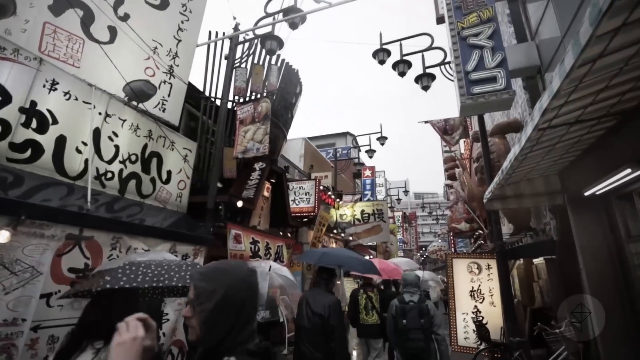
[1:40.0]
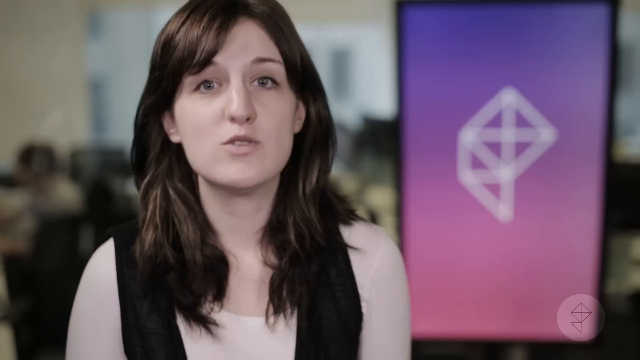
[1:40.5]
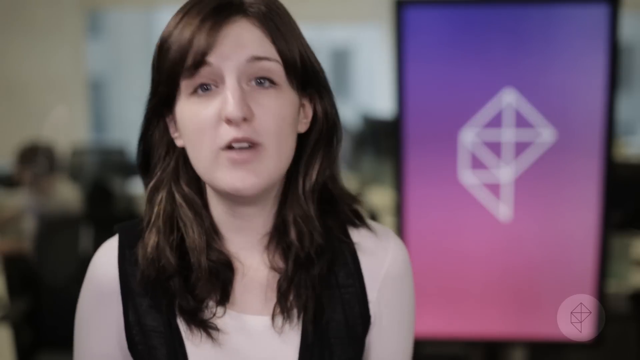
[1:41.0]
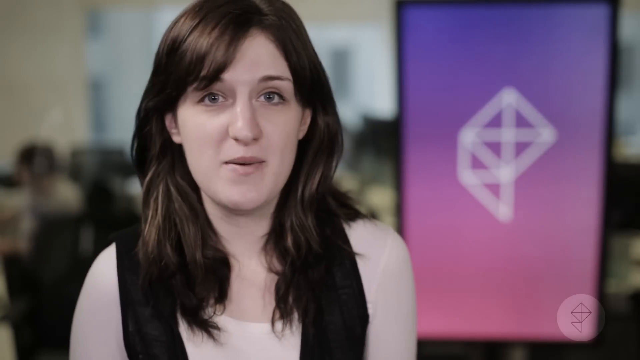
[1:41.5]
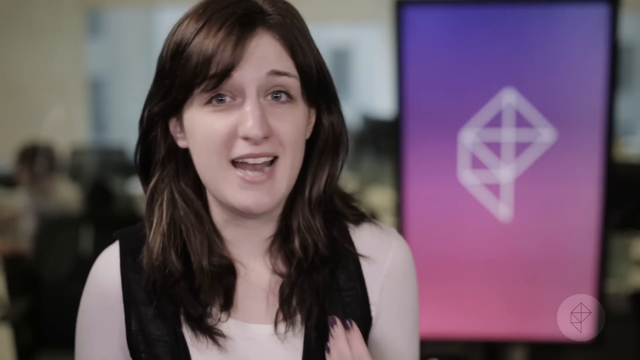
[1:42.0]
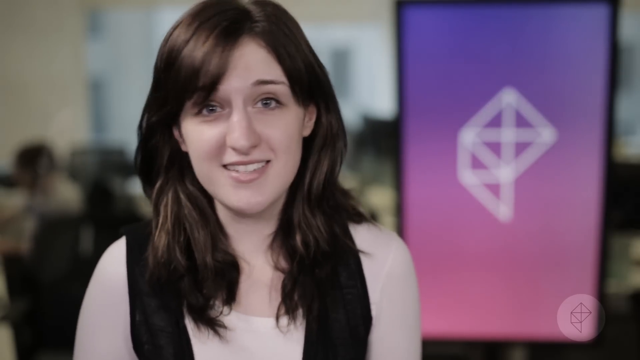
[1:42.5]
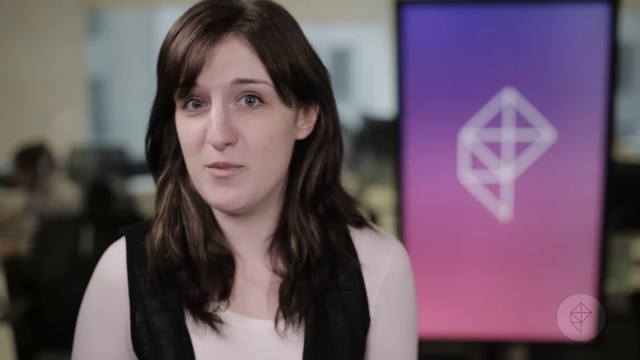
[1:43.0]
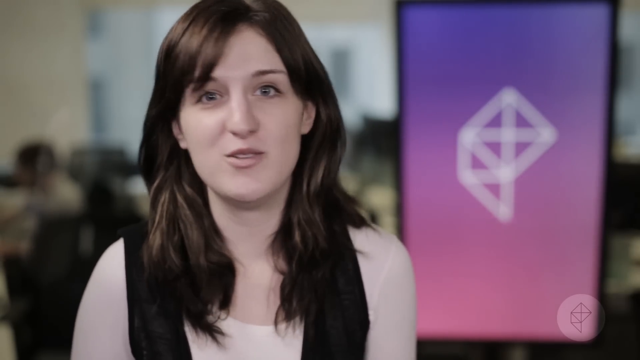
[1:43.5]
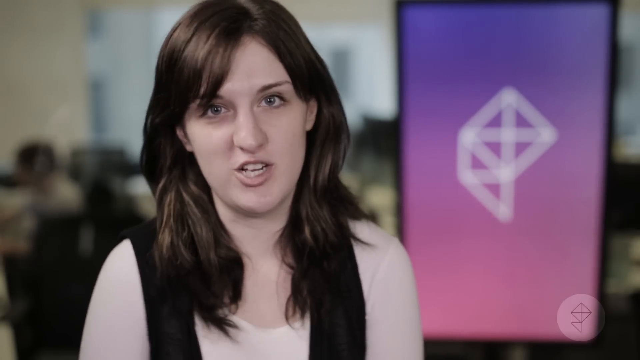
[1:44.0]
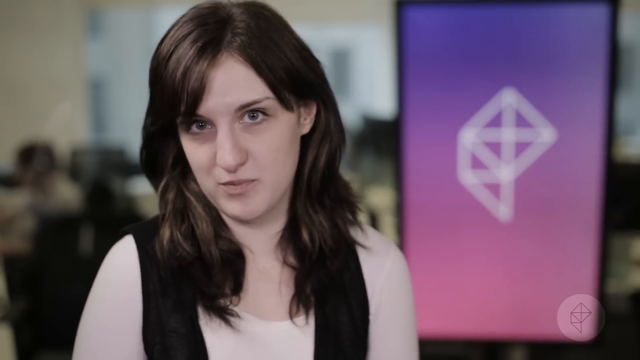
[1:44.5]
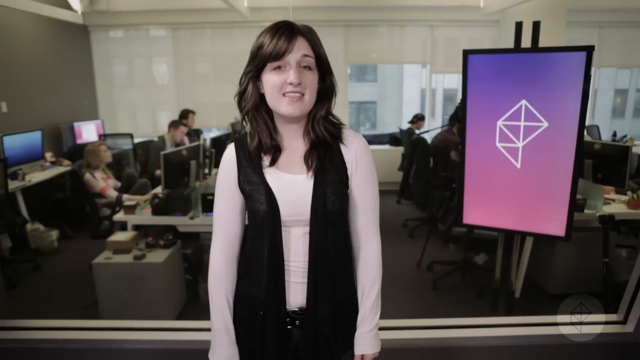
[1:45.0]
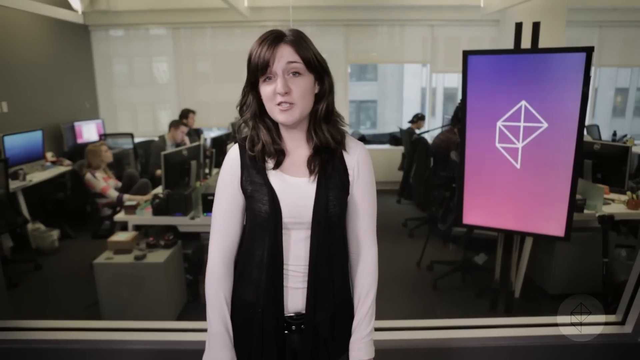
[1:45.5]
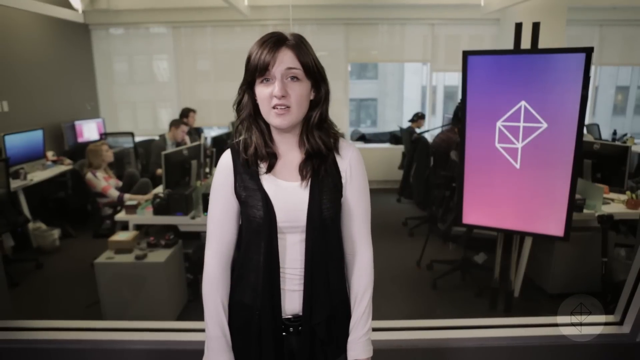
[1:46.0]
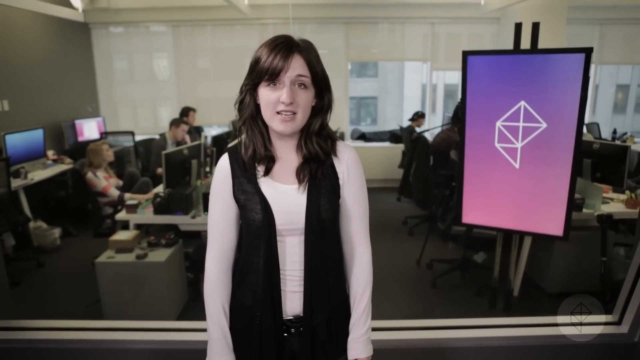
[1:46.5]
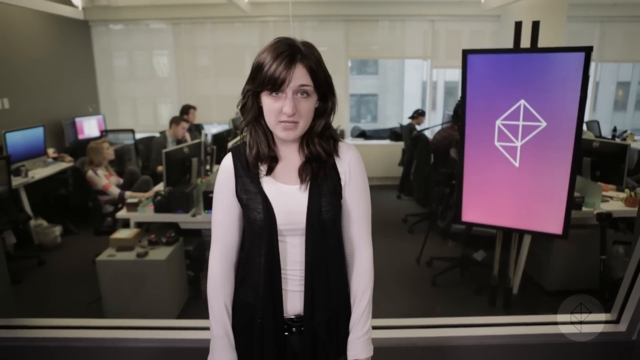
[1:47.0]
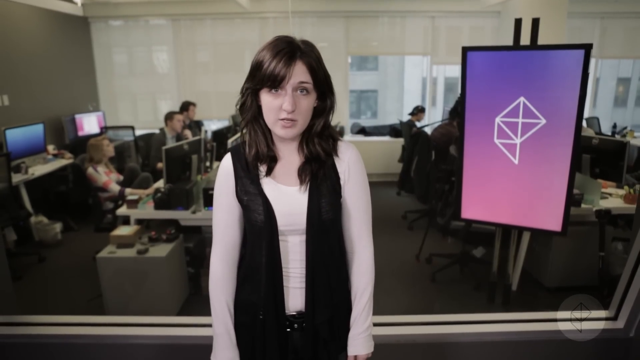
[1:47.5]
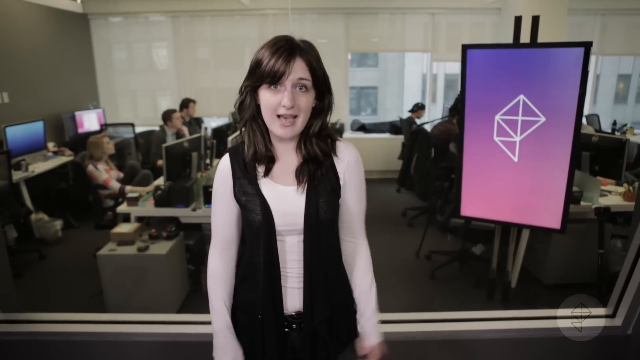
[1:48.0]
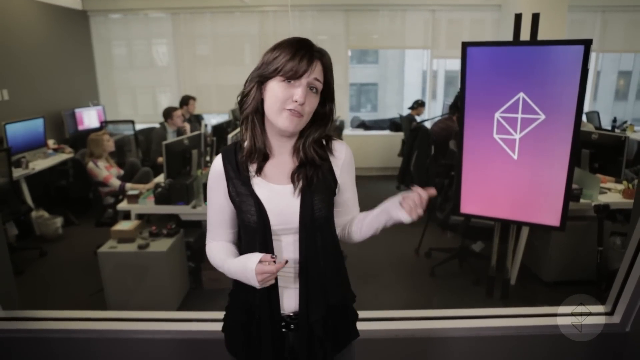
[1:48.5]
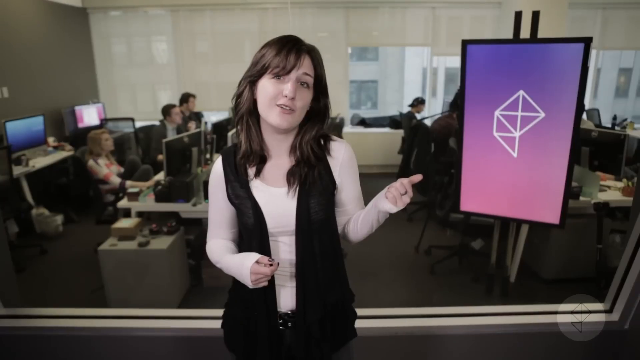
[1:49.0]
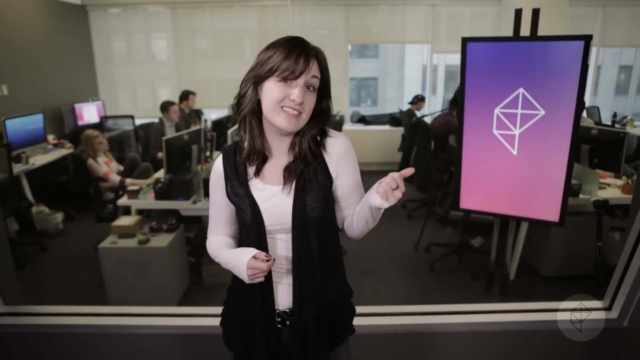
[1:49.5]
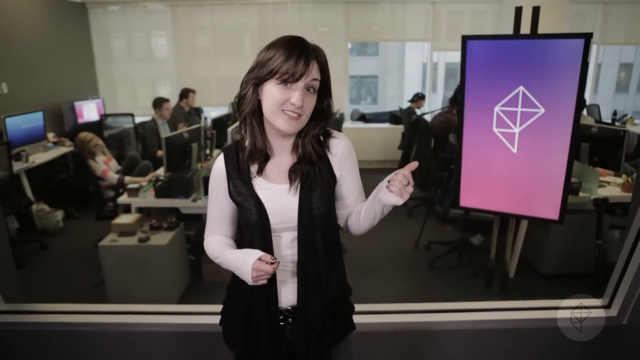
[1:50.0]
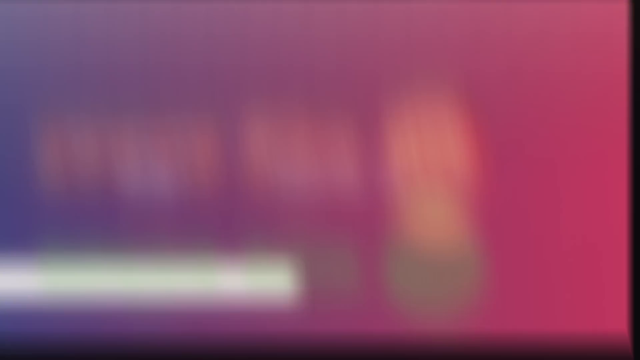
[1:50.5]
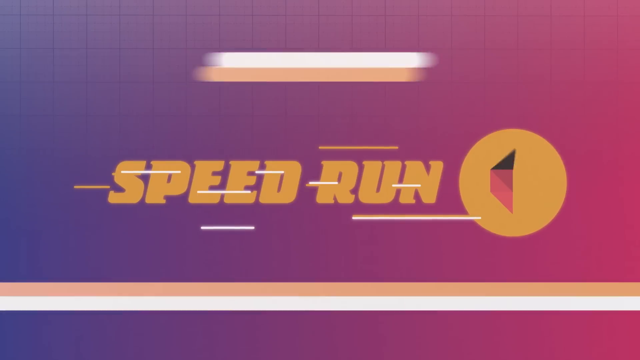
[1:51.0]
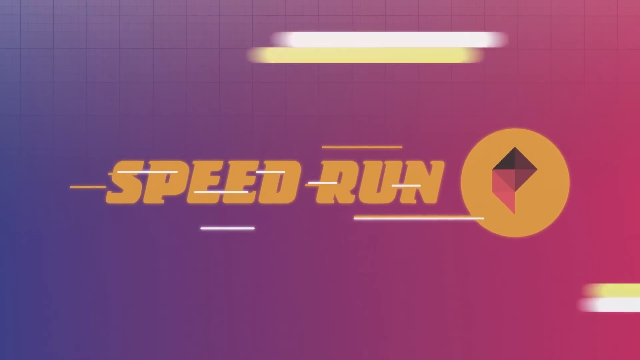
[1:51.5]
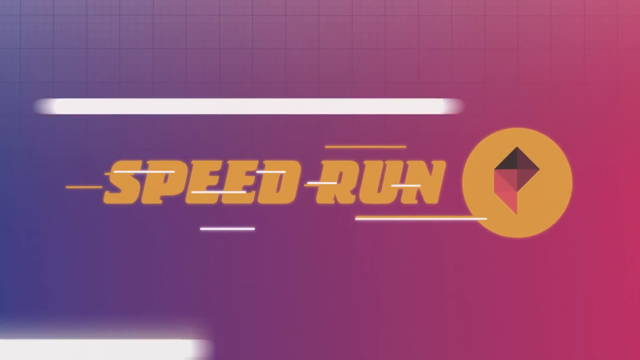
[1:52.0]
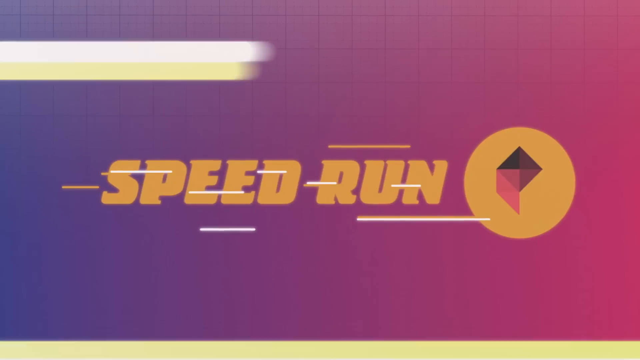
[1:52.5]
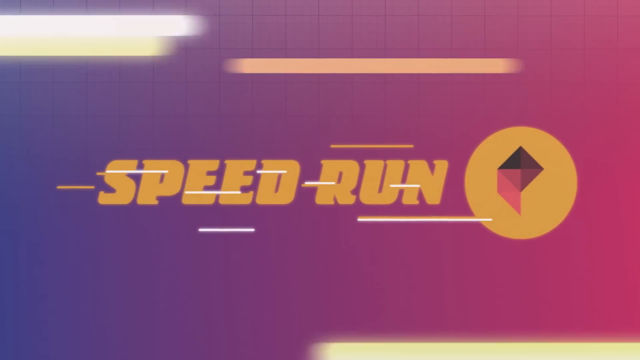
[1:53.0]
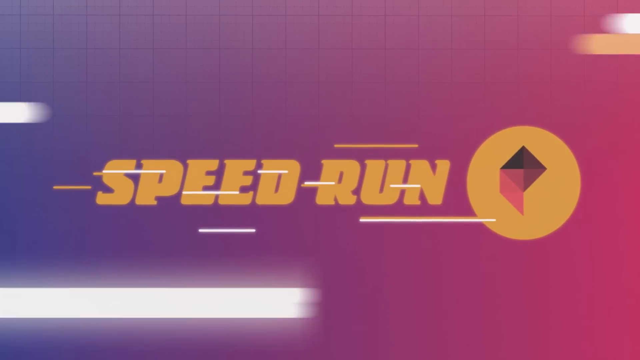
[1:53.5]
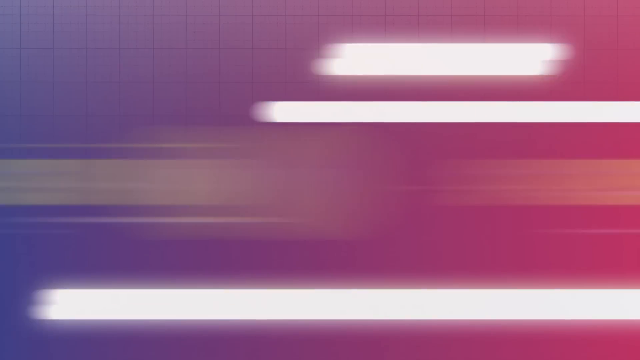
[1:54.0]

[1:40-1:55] The shot of people walking in the street continues, with Asian or Japanese signs and lettering everywhere; people wear coats and hoodies and some carry umbrellas. It looks like it could possibly be raining, with a grim, grayish look. The video cuts back to the reporter in a shoulder-up shot, speaking enthusiastically to the camera with a smile on her face. Another shot frames her from the waist up, showing people behind her working at desks with computers inside a building with windows; some windows are open and some have the blinds down. As she talks, she points to the monitor, which shows what looks to be the Polygon logo. A final title card reads "Speed Run."